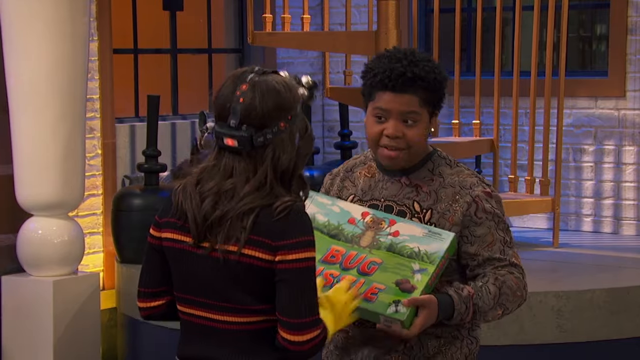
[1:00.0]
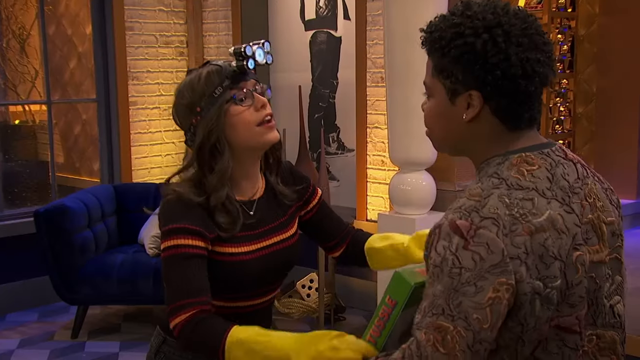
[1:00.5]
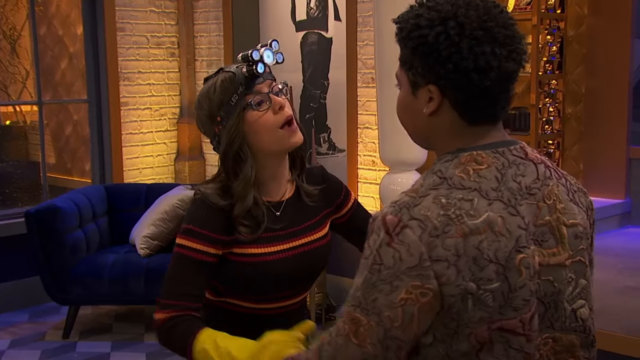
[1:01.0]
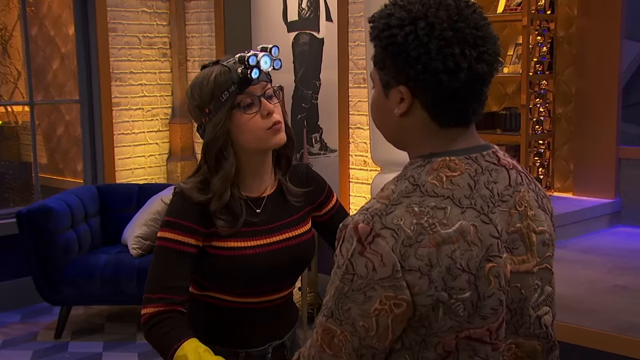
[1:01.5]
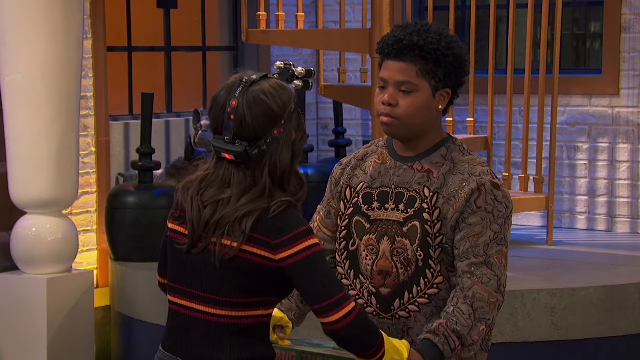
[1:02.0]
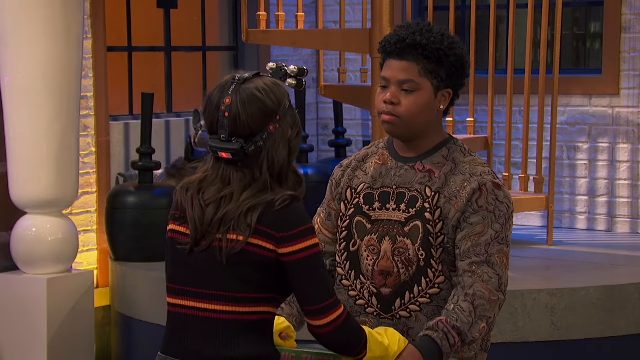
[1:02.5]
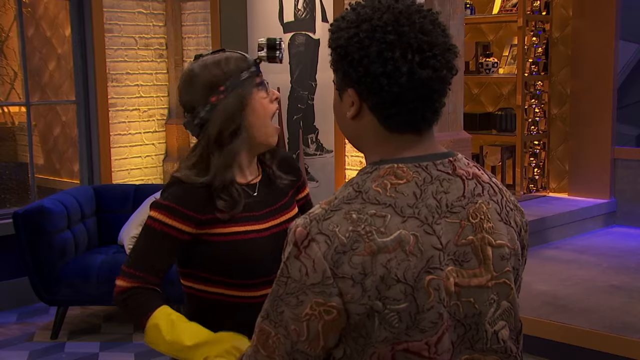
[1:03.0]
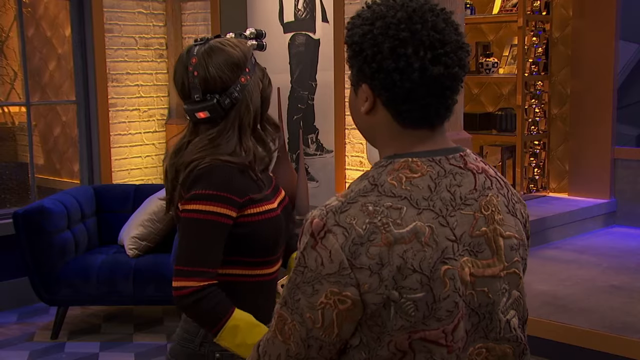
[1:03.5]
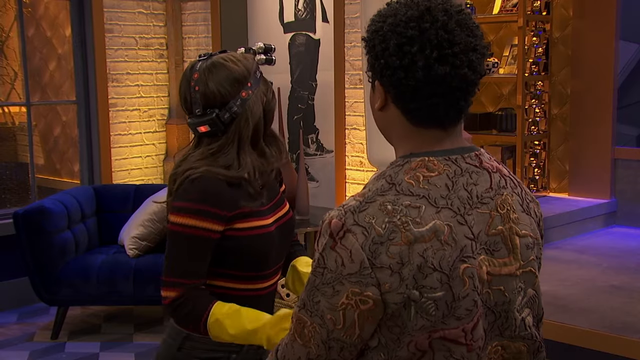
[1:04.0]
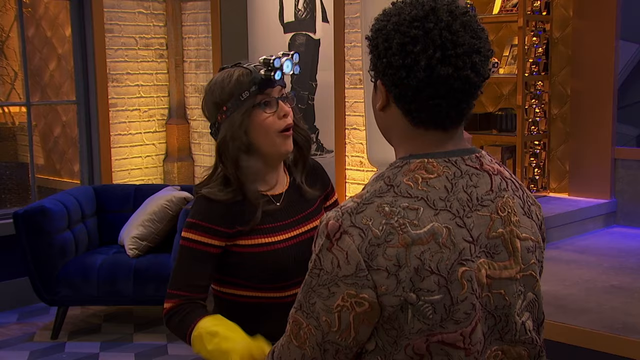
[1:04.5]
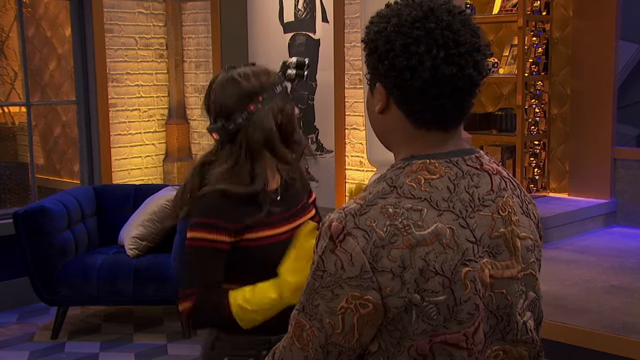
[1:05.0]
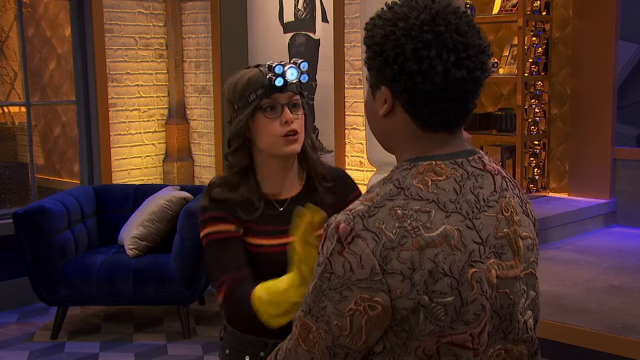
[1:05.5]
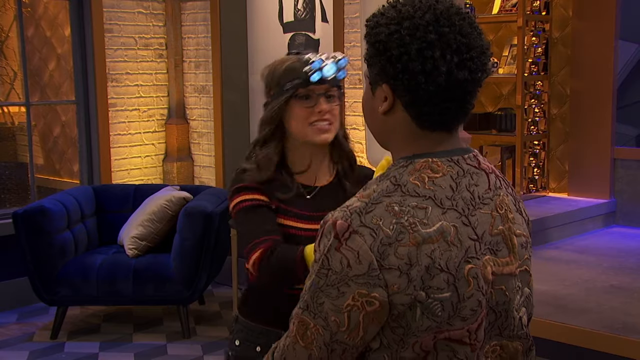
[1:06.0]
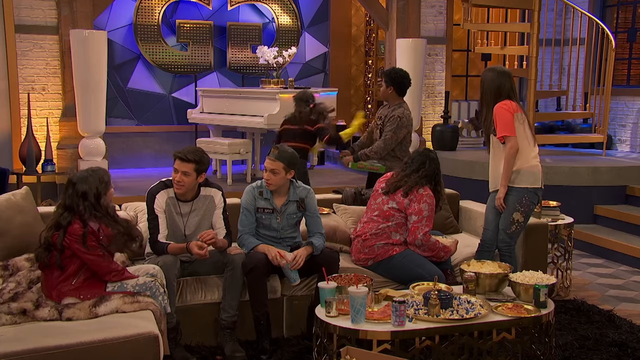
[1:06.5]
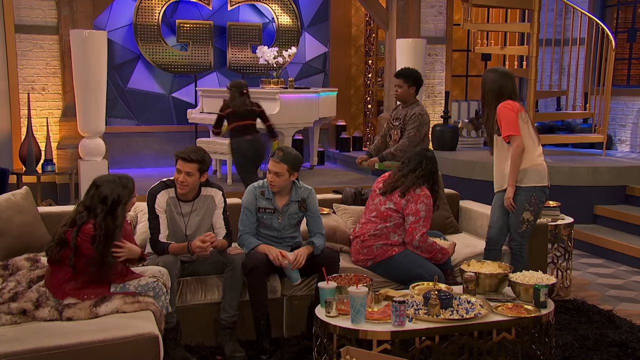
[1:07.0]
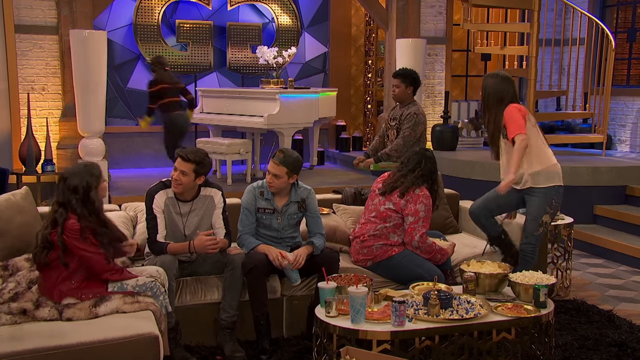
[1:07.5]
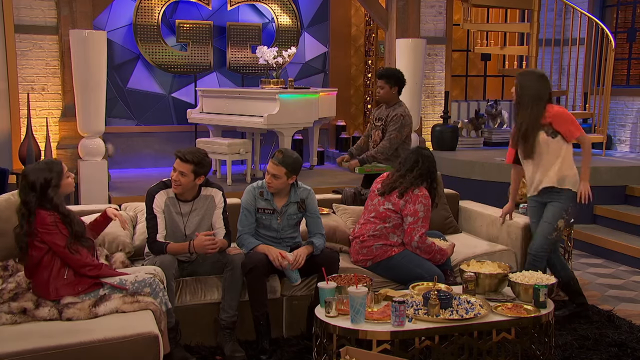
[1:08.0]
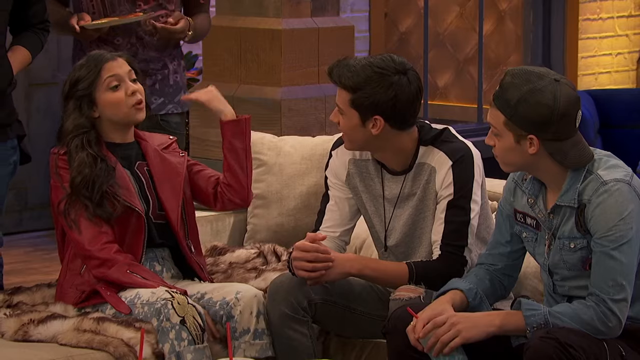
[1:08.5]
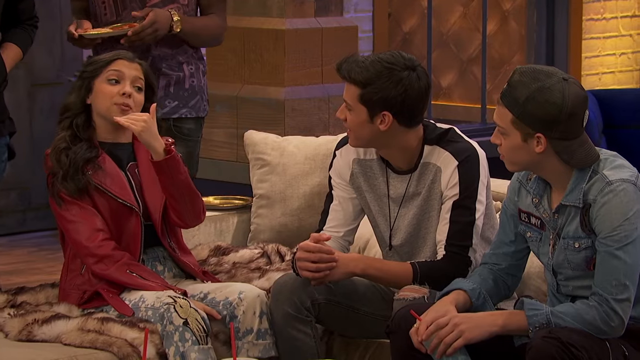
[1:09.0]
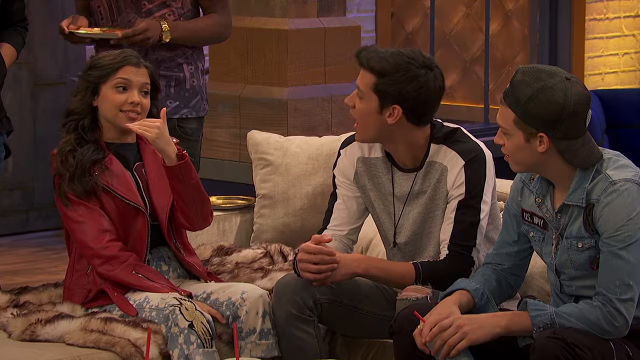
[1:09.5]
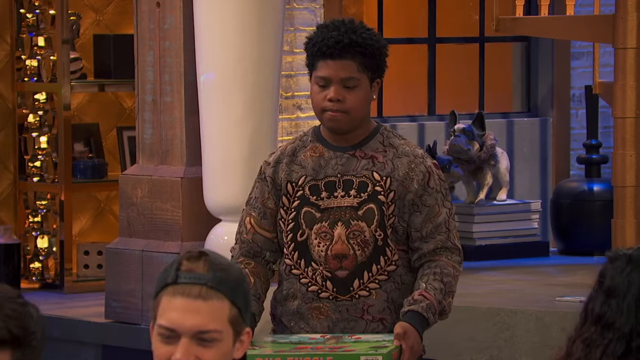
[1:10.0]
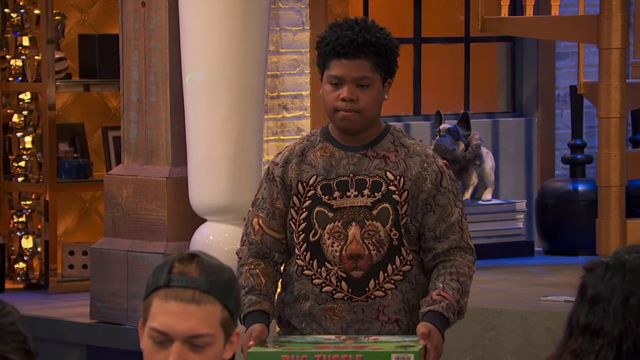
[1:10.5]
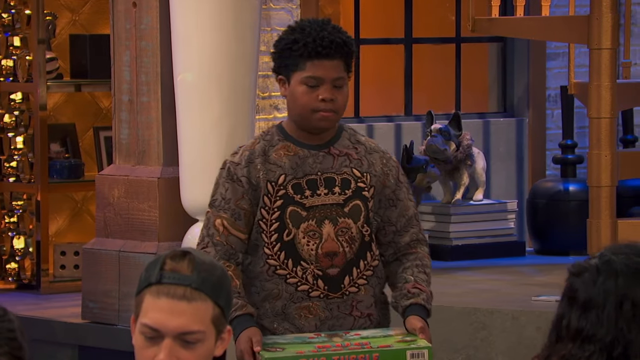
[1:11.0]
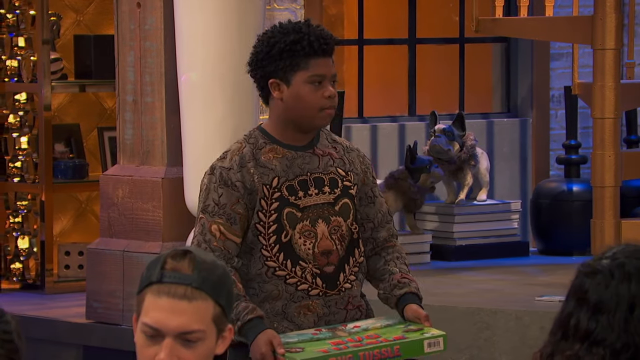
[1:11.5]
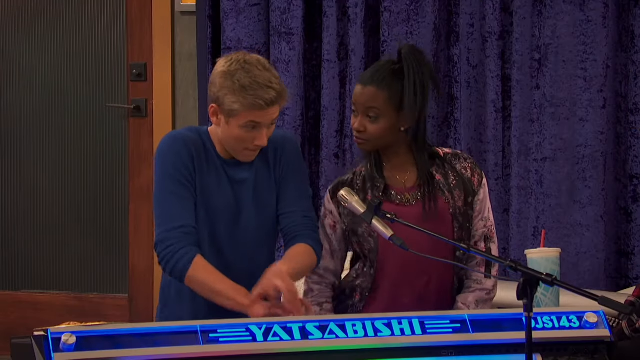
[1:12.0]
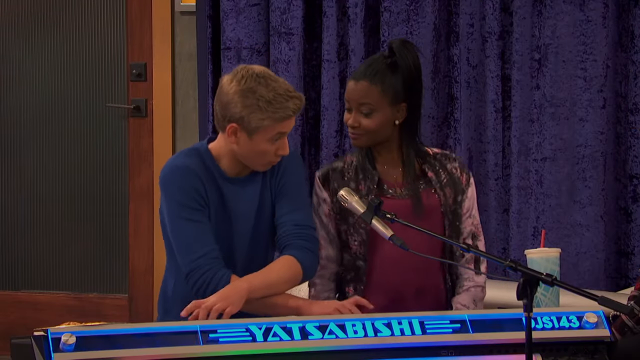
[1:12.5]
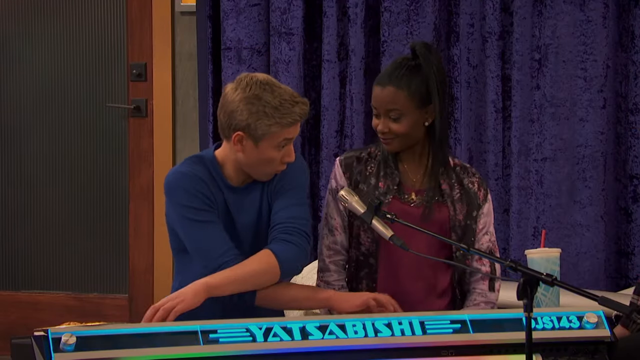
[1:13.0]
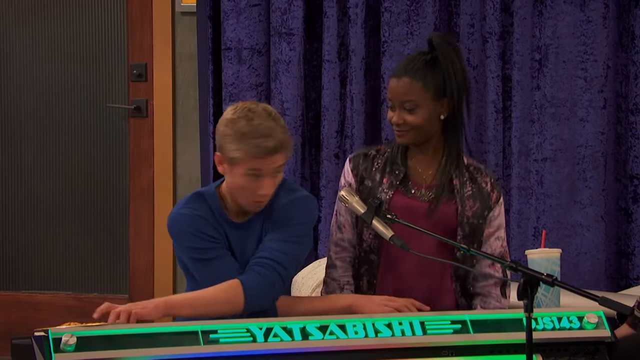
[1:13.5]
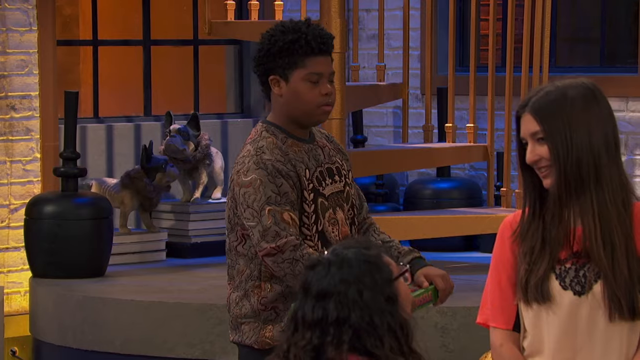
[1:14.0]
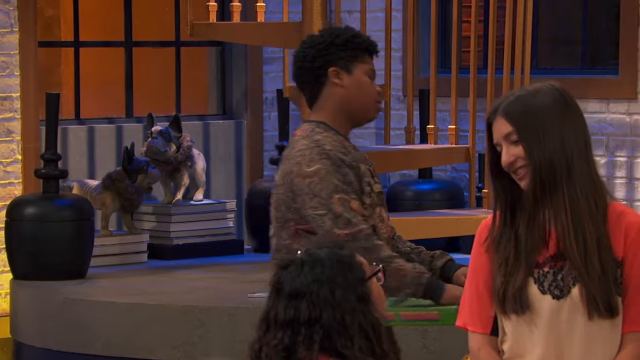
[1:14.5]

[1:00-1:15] The scene apparently depicts a party among young people. A young lady on the couch is talking with a series of other young people who all appear to be paying attention to her. Another girl, who appears to be in distress, attempts to alert the friend she is talking with that there is some sort of emergency, and she immediately exits the scene. In the background of the room, two young people are playing music, and everyone appears to be having a very enjoyable time.